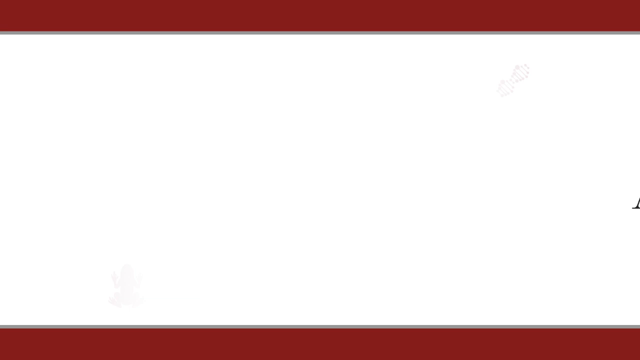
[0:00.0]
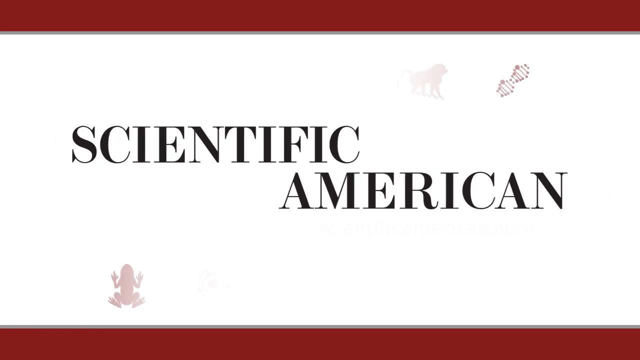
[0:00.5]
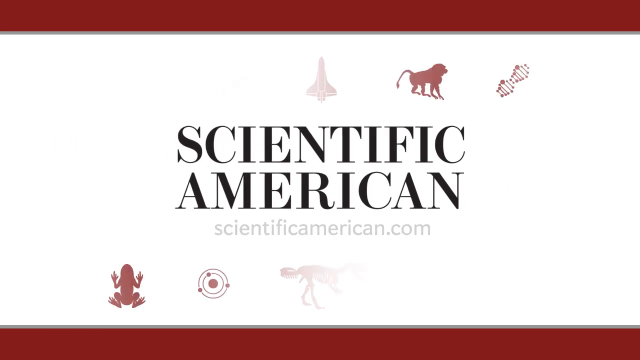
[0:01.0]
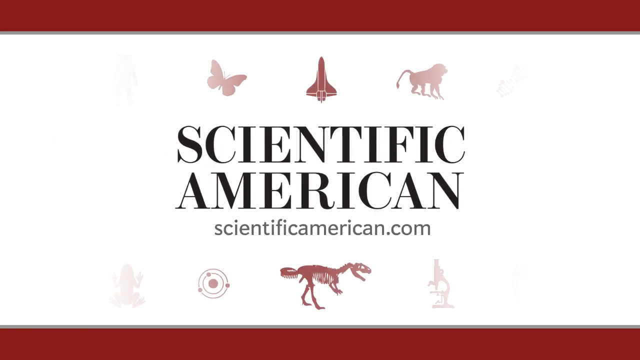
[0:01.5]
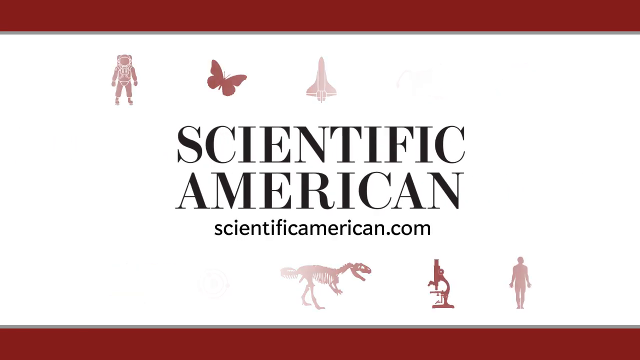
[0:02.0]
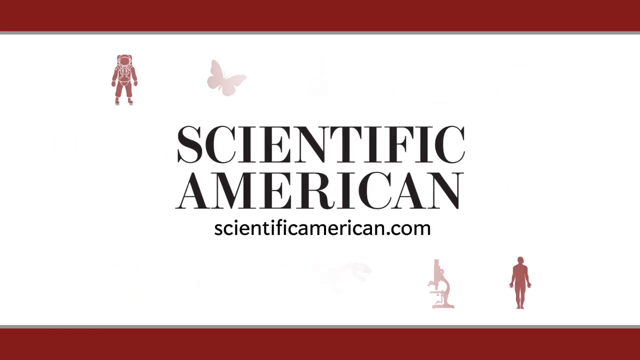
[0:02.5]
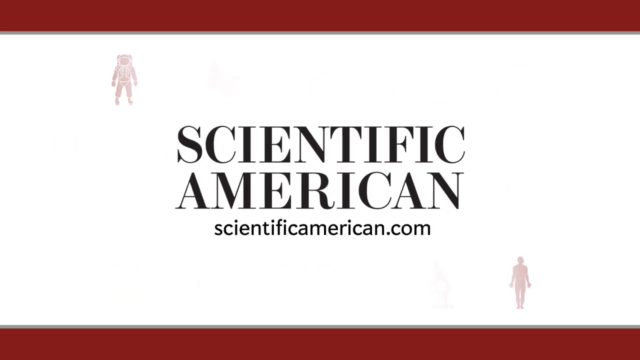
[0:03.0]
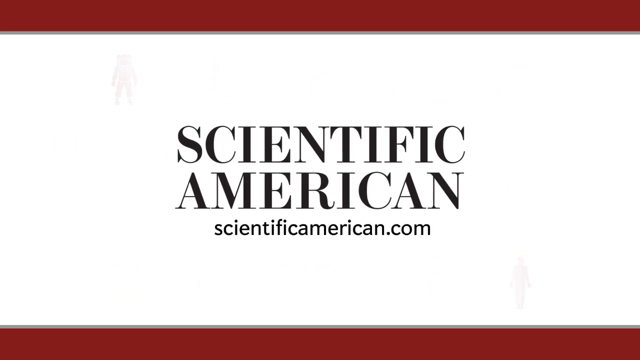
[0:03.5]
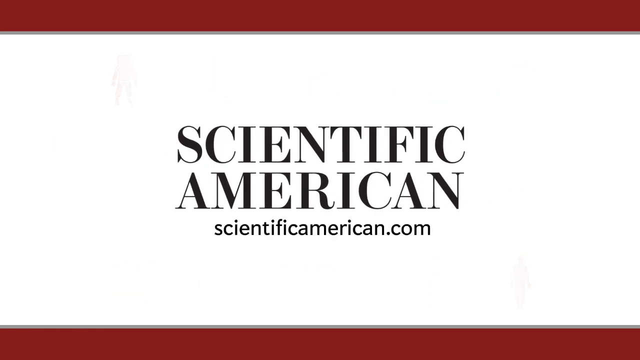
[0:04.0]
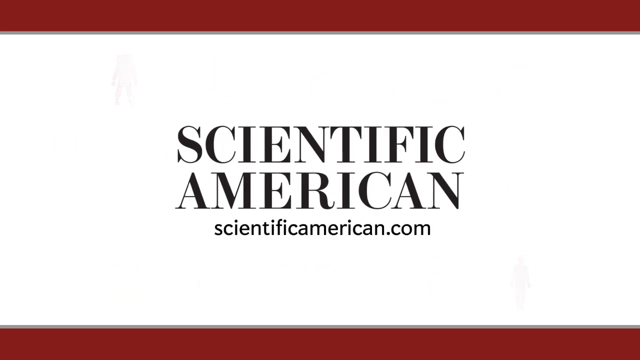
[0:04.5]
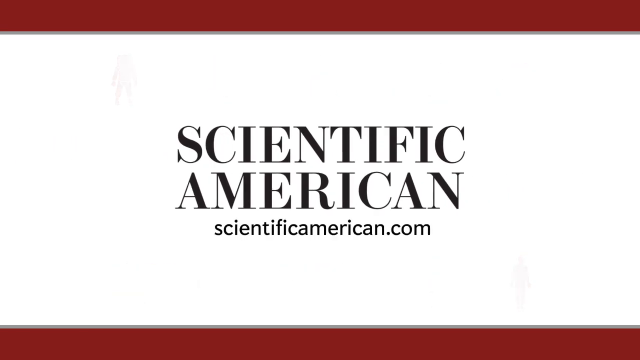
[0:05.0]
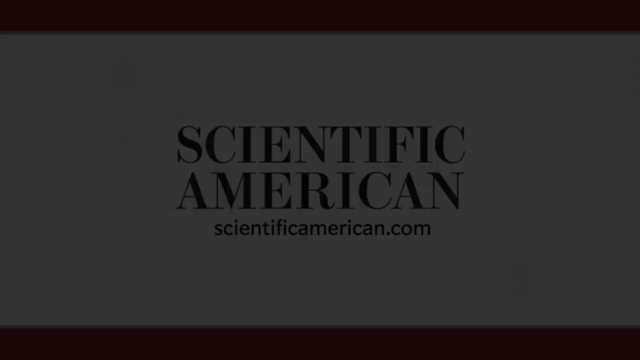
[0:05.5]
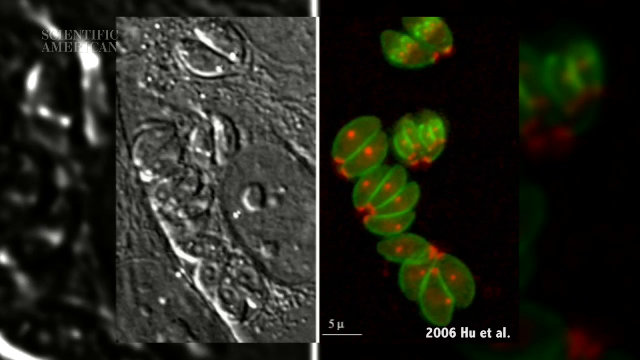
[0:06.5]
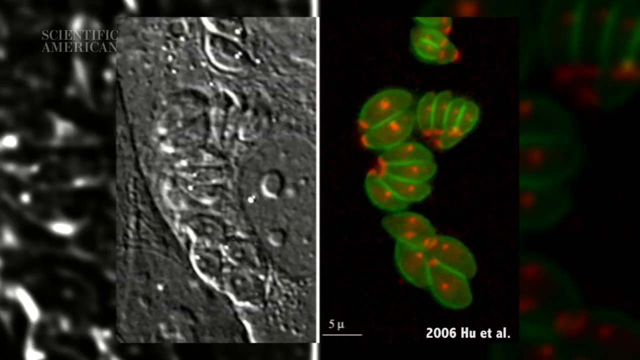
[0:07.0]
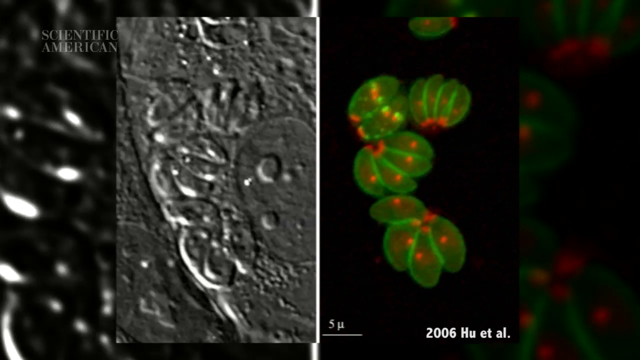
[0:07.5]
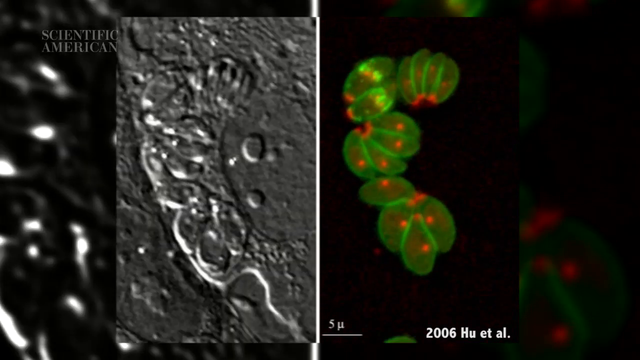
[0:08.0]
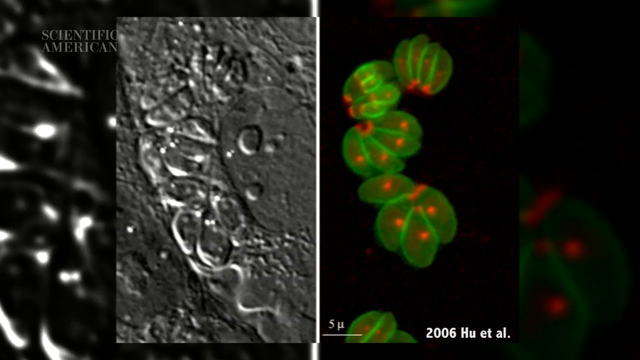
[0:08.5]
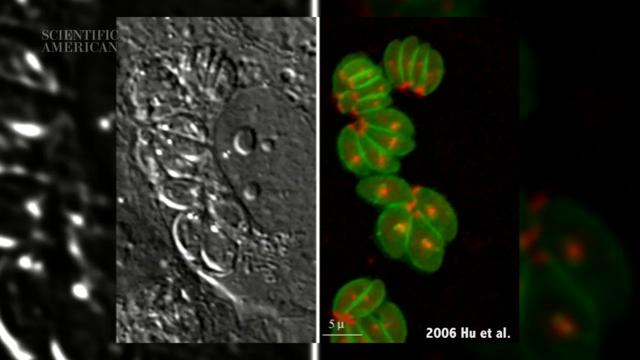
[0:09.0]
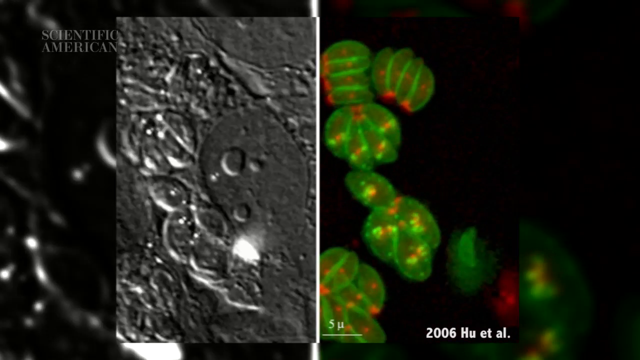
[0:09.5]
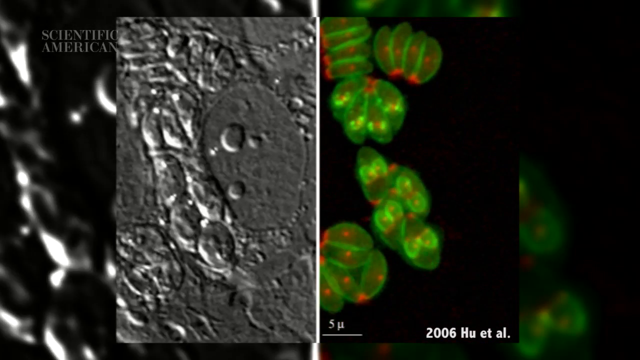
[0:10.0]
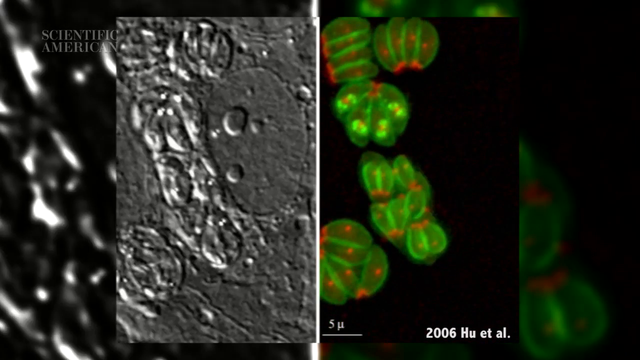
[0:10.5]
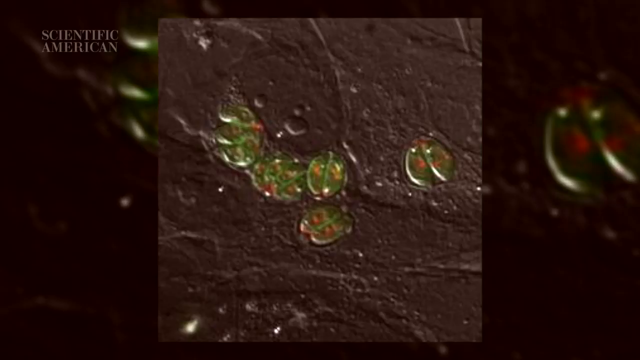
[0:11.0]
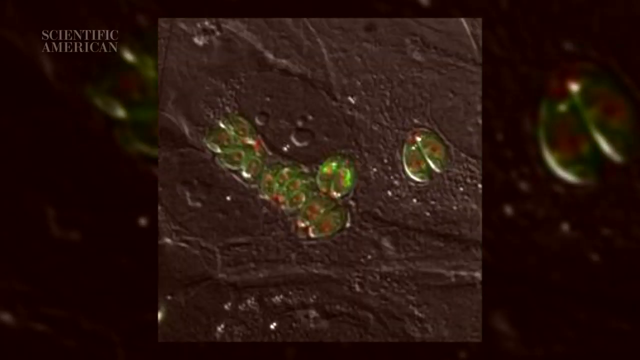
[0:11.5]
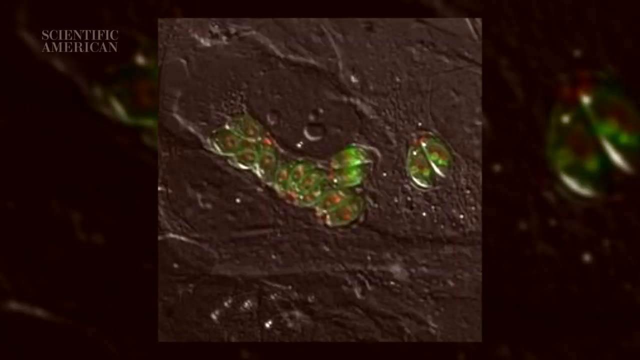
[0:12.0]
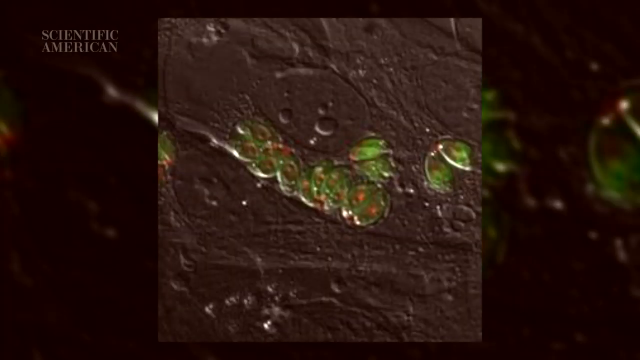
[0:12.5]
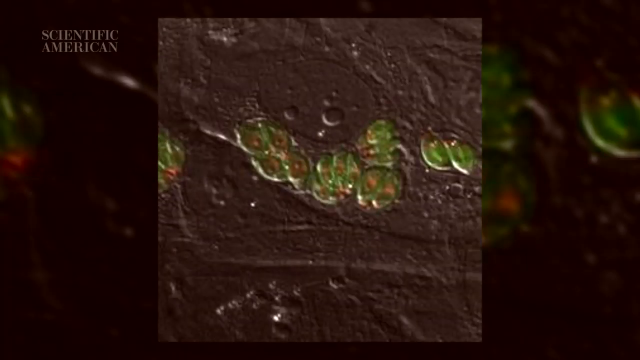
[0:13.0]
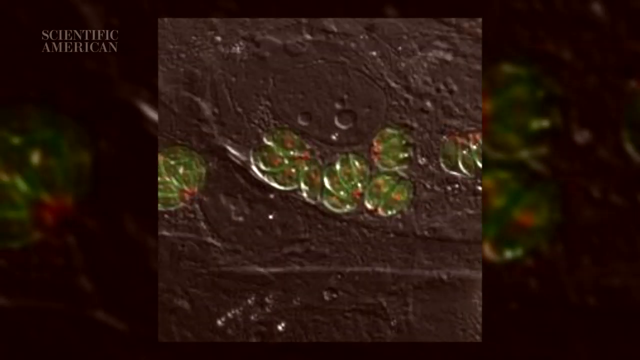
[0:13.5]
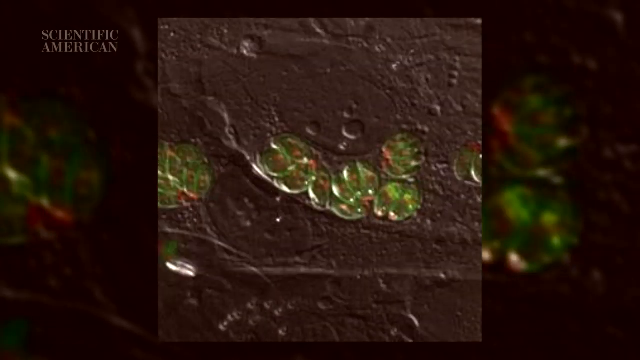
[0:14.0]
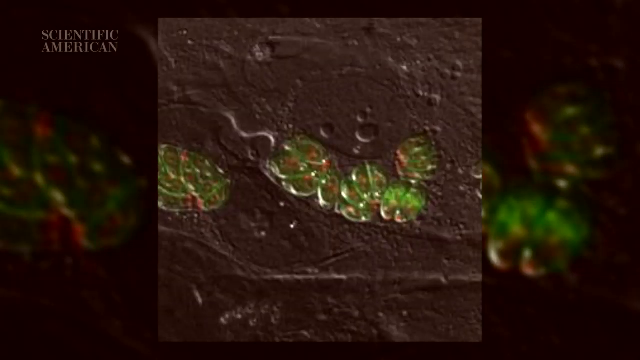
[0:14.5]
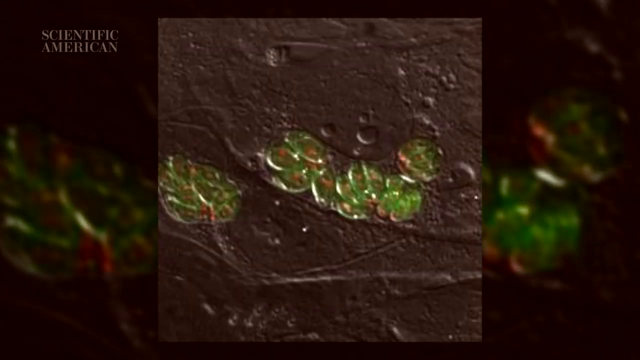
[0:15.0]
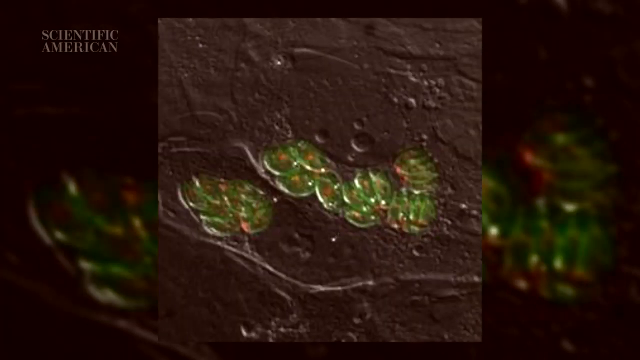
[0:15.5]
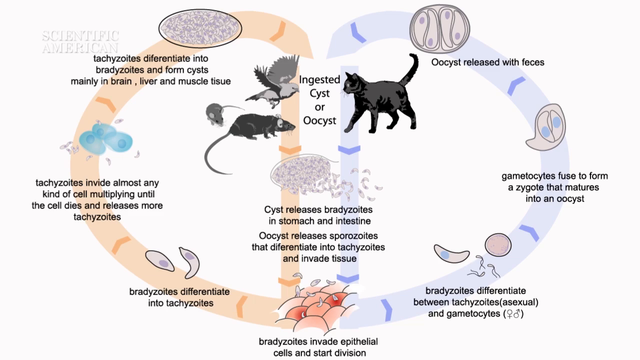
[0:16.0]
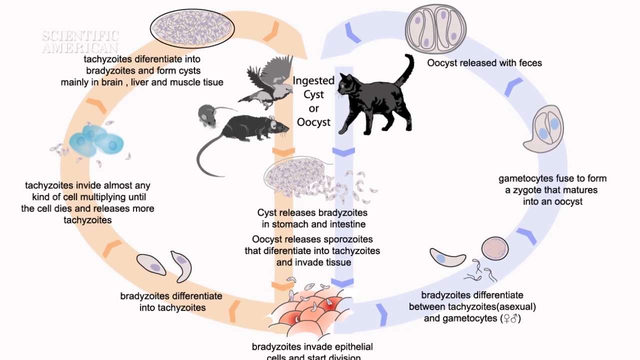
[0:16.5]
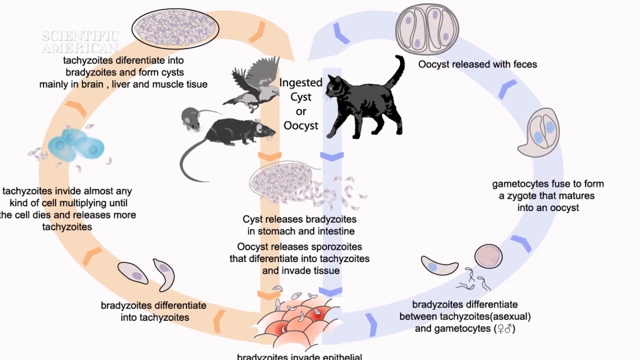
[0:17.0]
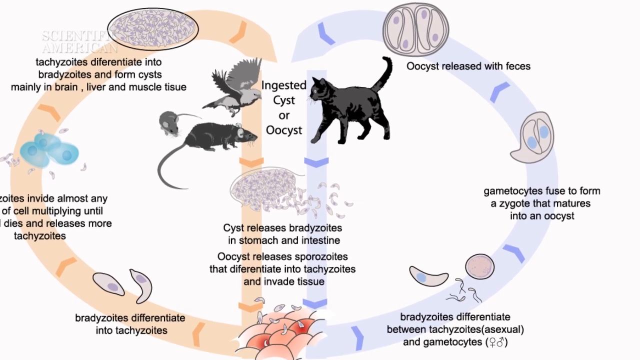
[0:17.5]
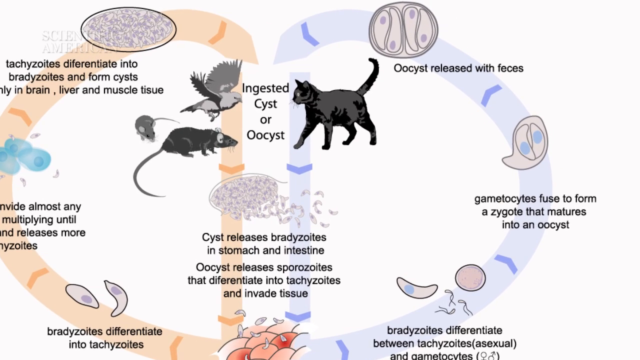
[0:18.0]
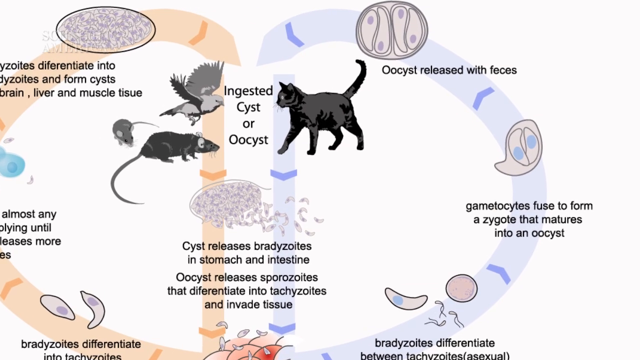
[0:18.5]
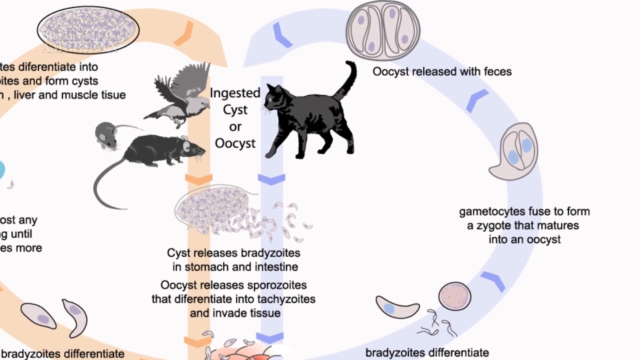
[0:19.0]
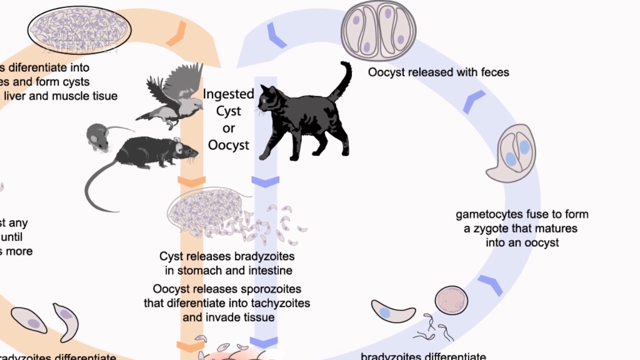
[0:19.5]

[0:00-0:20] The video opens with the title Scientific American and the website address. It then transitions to what looks almost like a magnified view of two different cells, one shown in grey and the other in colour, with green and orange clearly visible. A second magnified view follows, this time with an almost grey background but with green and orange dots visible inside it as well. The slide then changes to a sketch showing birds, rats, mice and a cat, connected by a flow diagram that mentions certain things being released with faeces and something maturing into oocyst. The diagram shows how these different organisms are interrelated and how they can exist in certain tissue, such as liver and muscle tissue or even brain tissue, and be transferred between species.